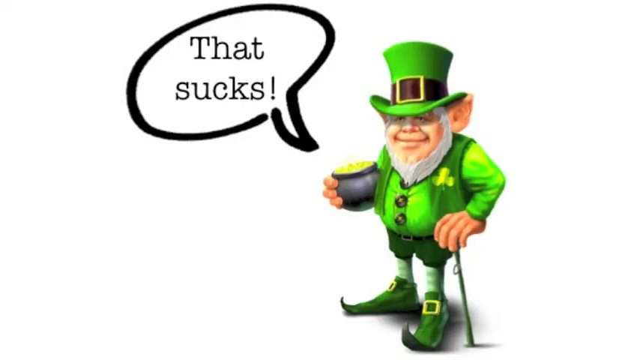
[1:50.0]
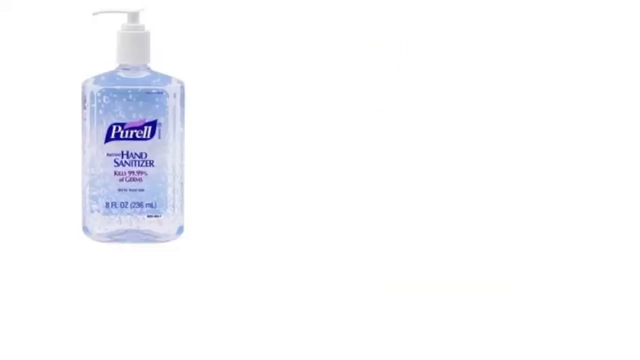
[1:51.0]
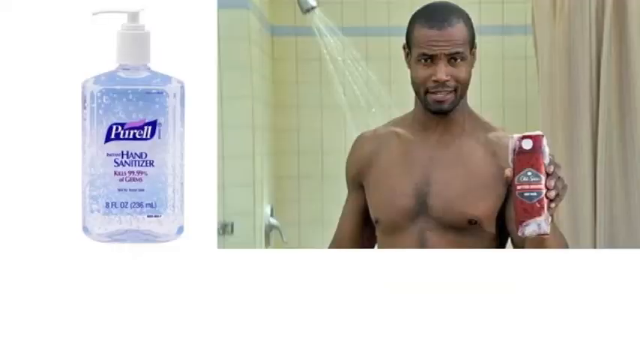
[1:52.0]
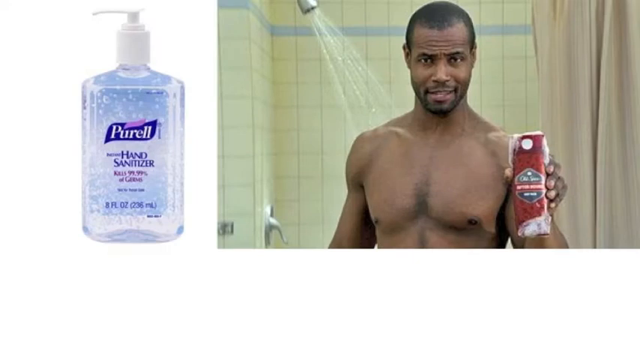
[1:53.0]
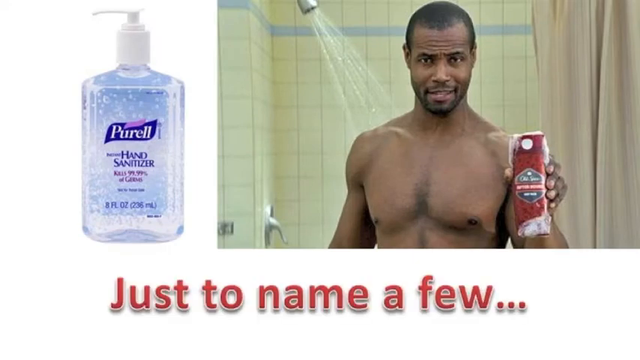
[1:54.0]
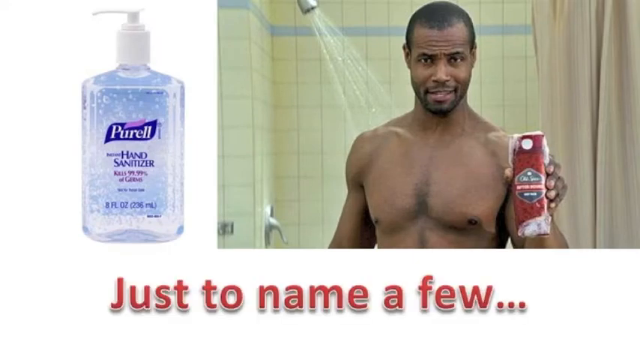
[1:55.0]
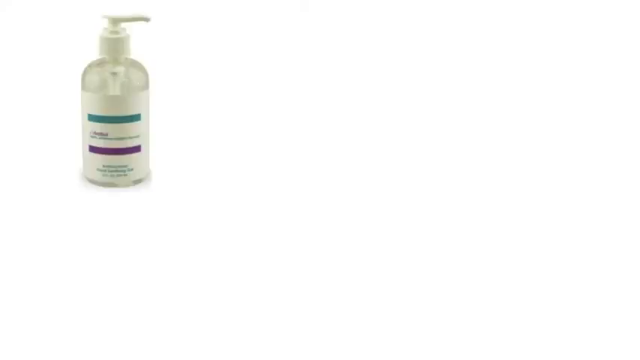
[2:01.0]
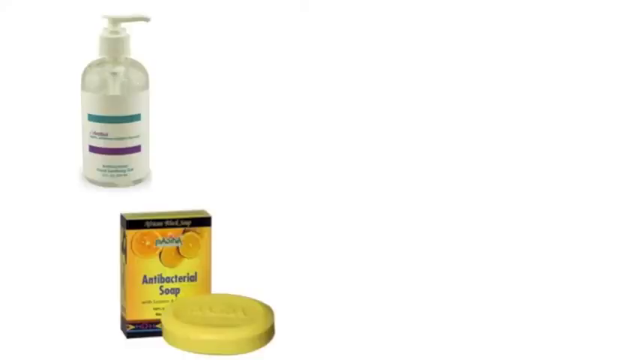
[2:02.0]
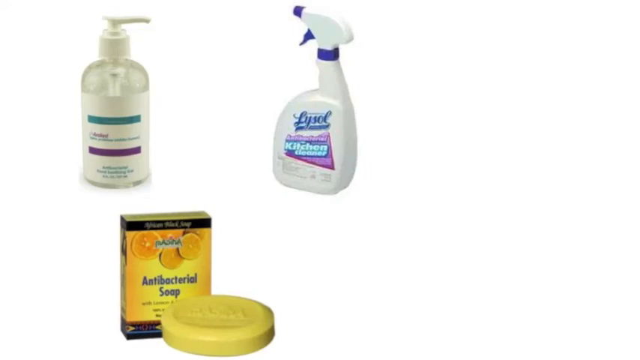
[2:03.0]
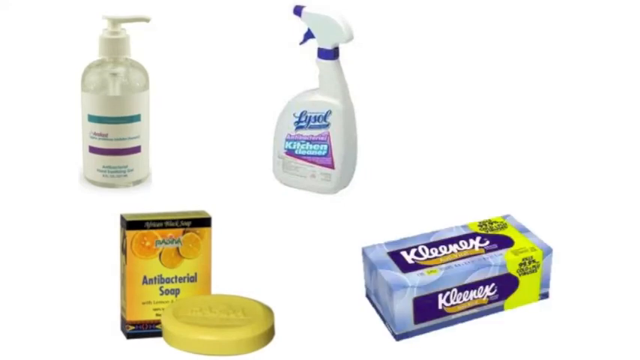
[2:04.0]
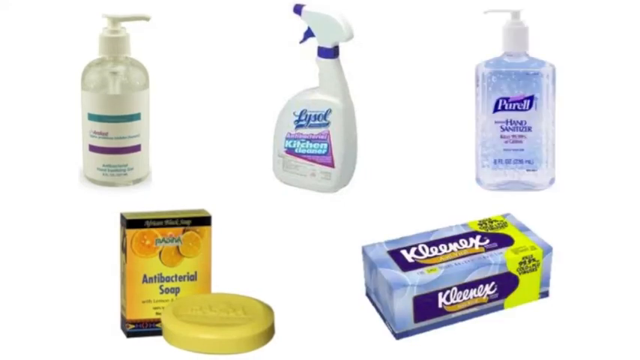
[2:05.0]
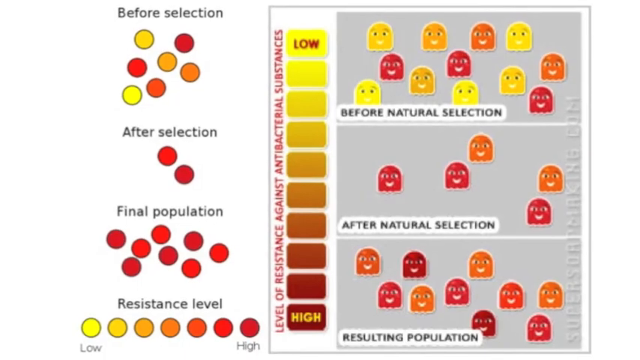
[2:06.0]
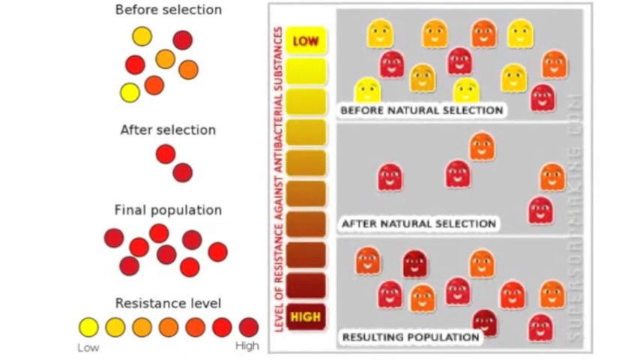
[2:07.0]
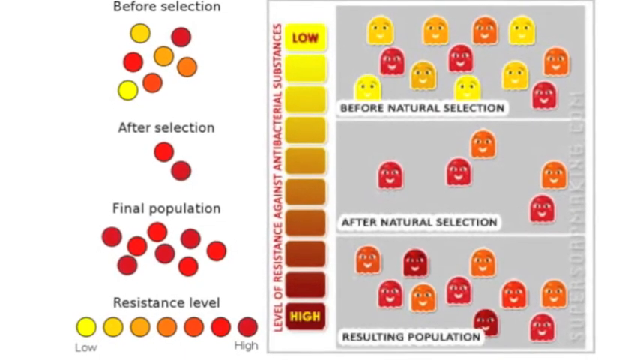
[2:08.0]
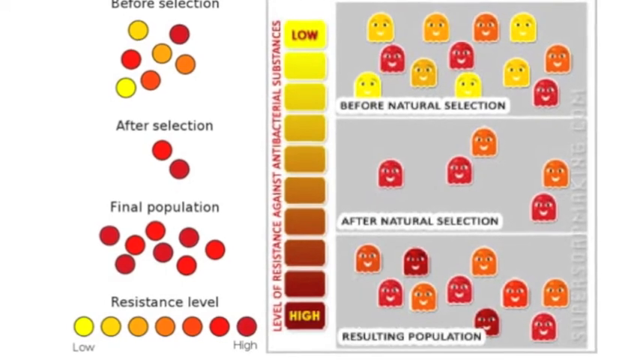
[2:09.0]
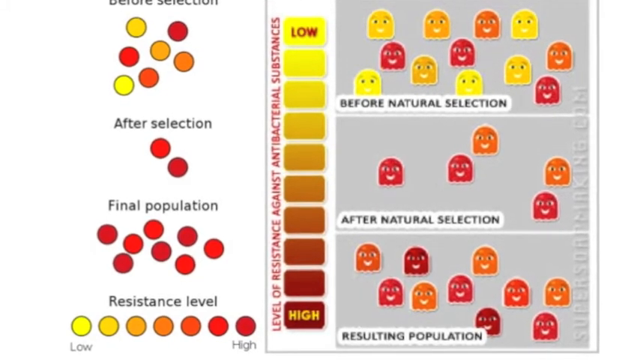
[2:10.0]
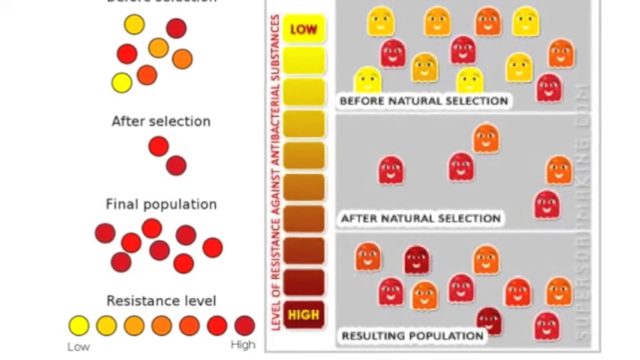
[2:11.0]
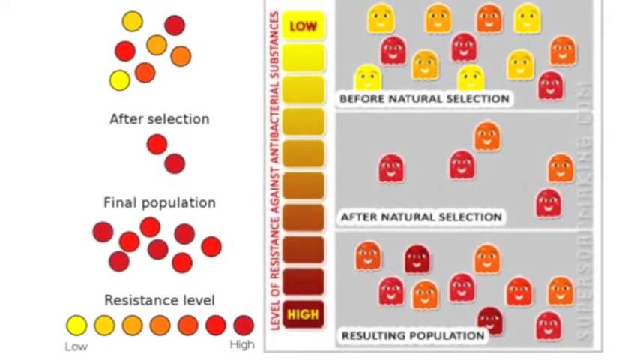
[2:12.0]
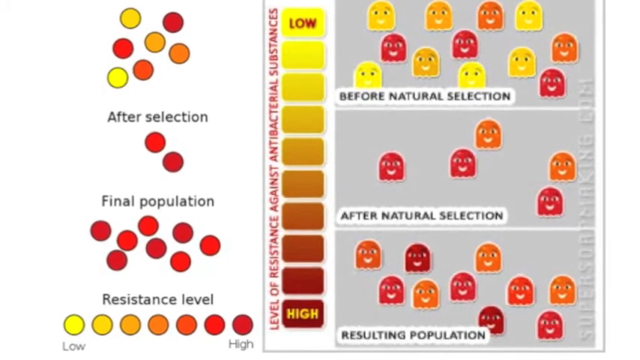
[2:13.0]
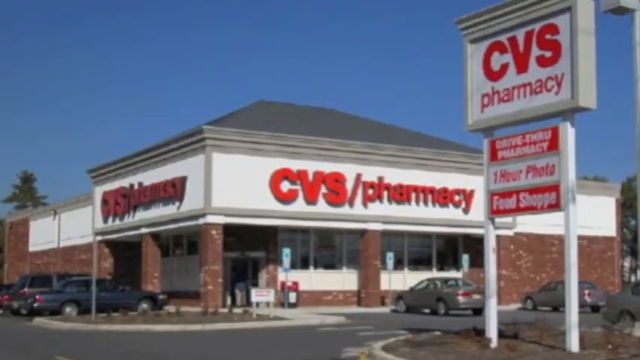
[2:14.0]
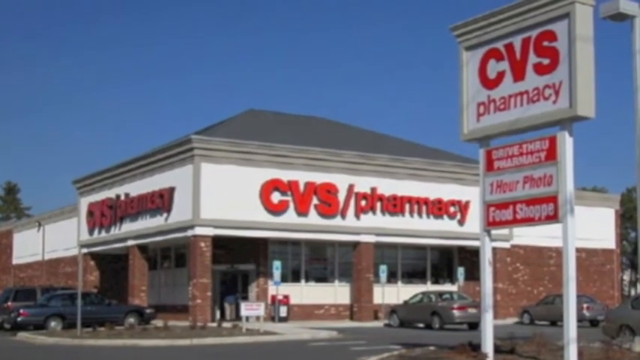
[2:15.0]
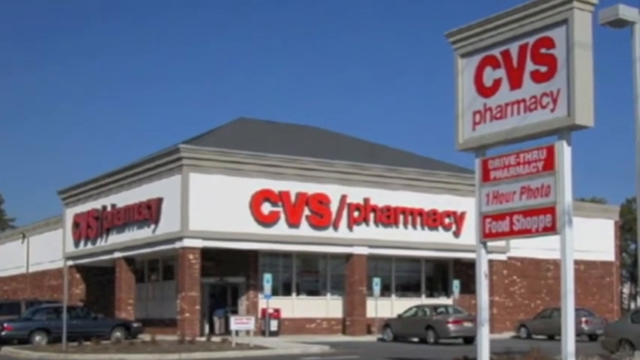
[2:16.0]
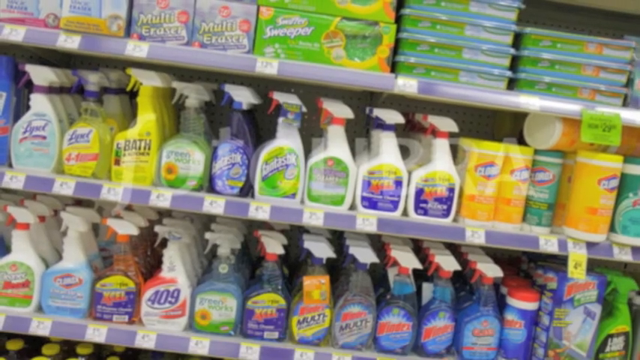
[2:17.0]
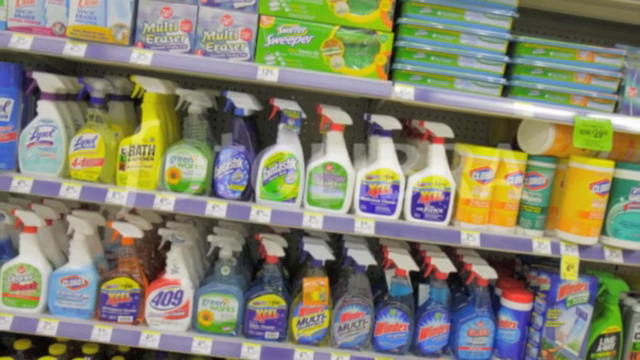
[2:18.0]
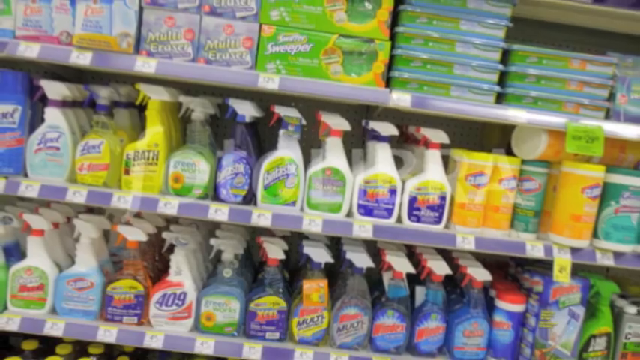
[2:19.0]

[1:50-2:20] The leprechaun holds a black pot of gold and a little cane; he wears green shoes and a golden-green shirt with a vest bearing a three-leaf clover, and has pointy ears and a smug, happy little face, with "that sucks" in bubble letters. Beside his head appears Perel hand sanitizer in bottles with white caps, then a Black man in a shower holding Old Spice, apparently a red bottle; the man then disappears. A bunch of disinfectants and Kleenex appear, text reads "just name a few", and little pop-ups of cleaning supplies on a white background follow. A chart labeled "before selection", "after selection" and "final population" shows smaller and larger red dots and yellow and orange marking low to high. Then a store appears with many products, labeled "CBS Pharmacy", including kitchen cleaning supplies, scrubbers and brushes.